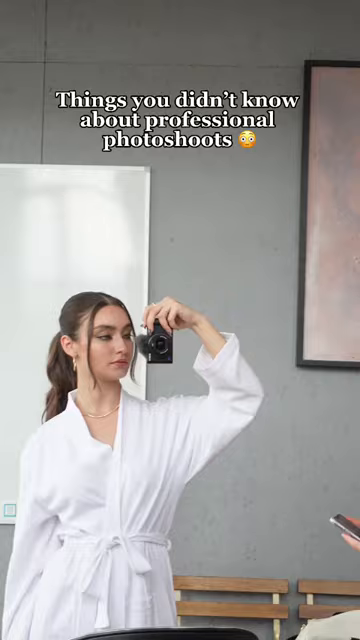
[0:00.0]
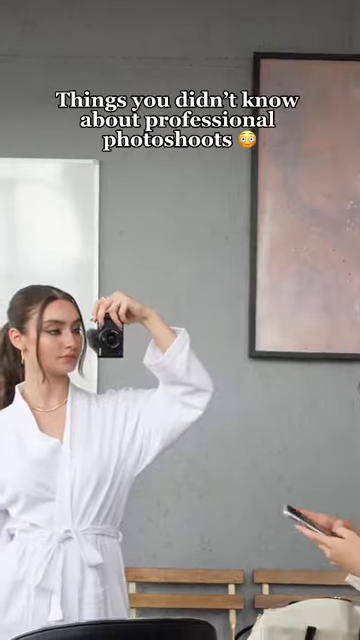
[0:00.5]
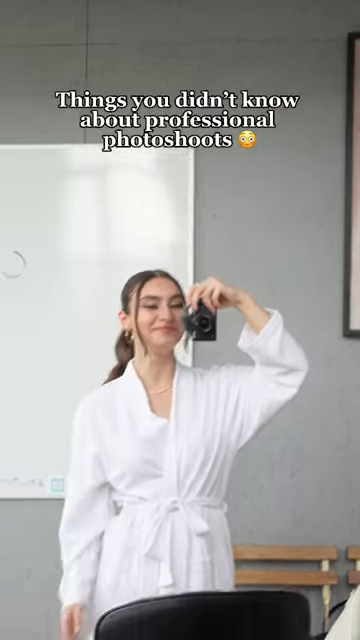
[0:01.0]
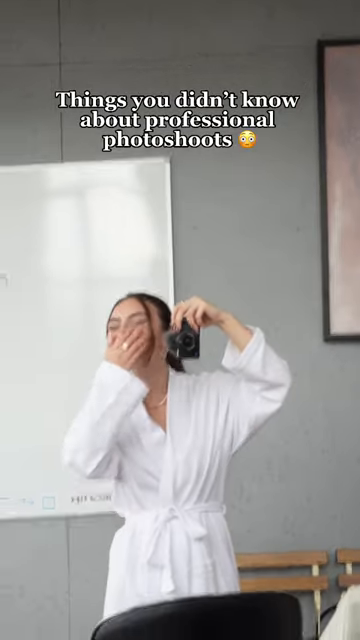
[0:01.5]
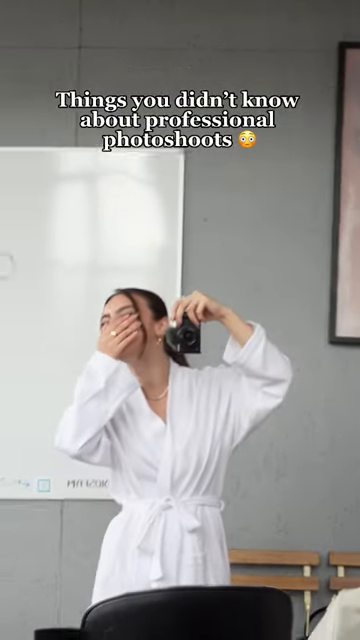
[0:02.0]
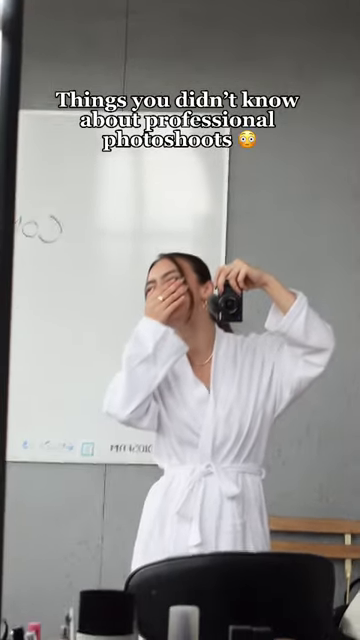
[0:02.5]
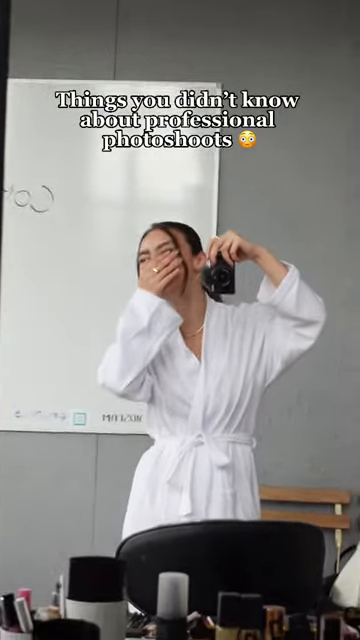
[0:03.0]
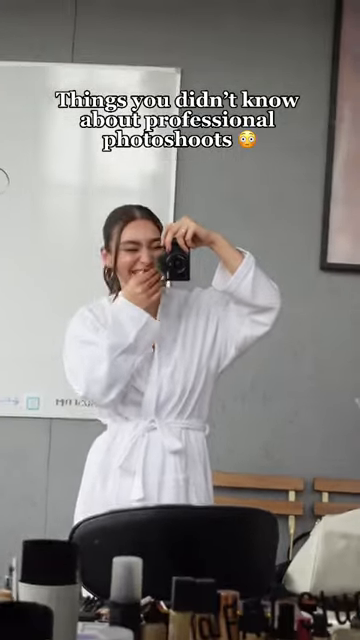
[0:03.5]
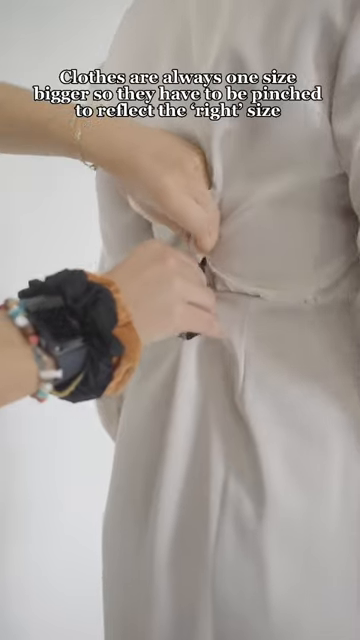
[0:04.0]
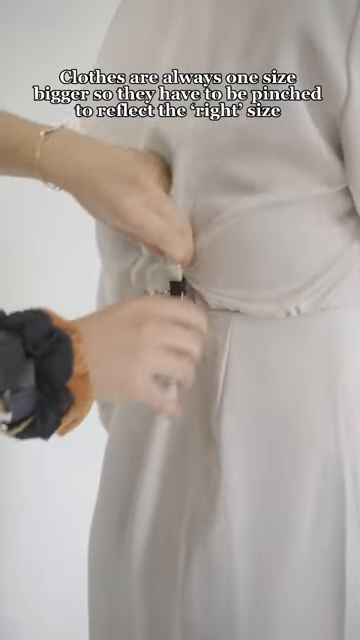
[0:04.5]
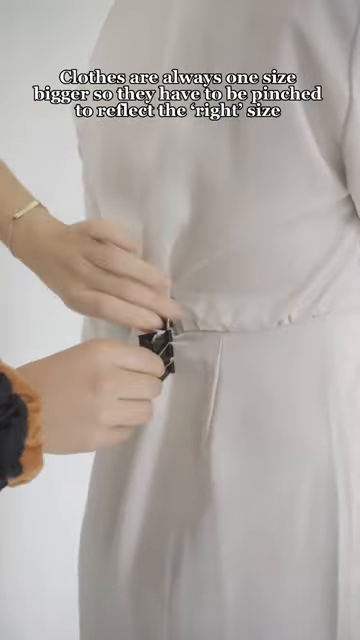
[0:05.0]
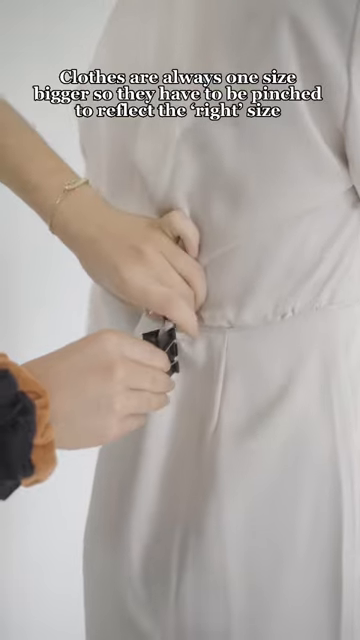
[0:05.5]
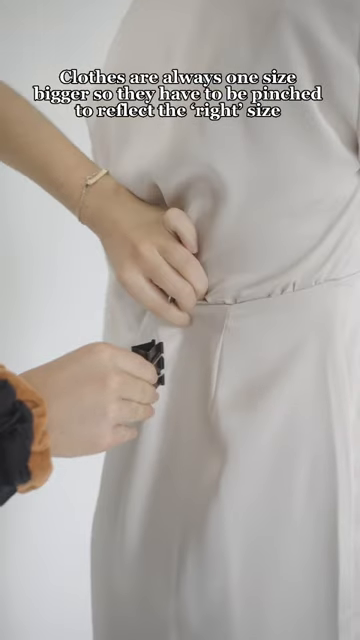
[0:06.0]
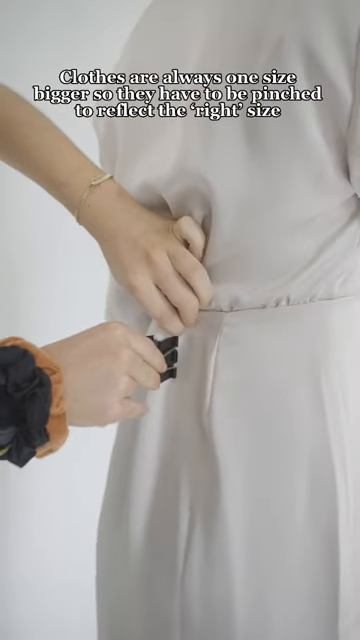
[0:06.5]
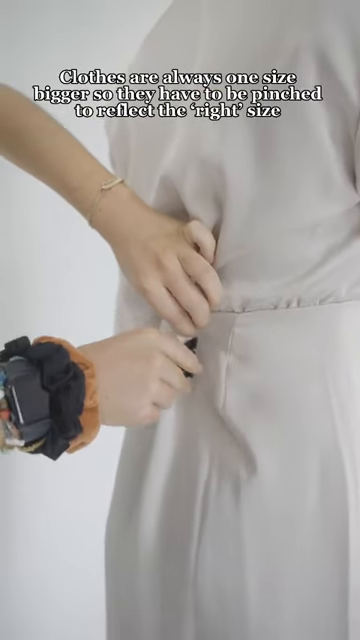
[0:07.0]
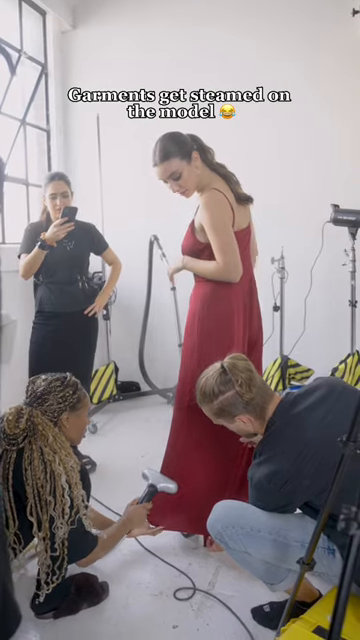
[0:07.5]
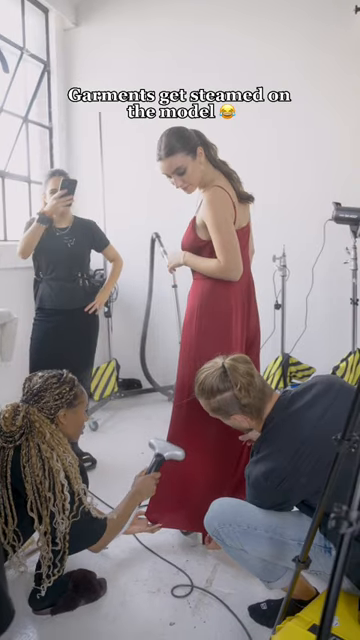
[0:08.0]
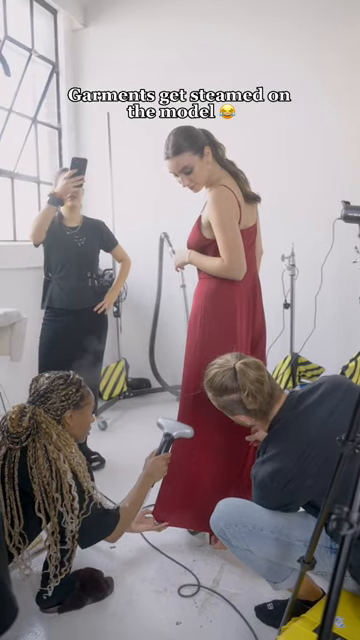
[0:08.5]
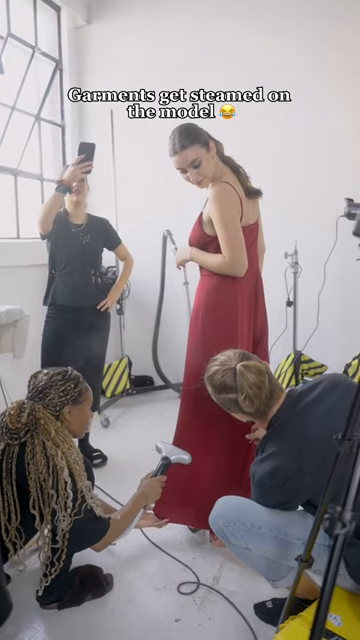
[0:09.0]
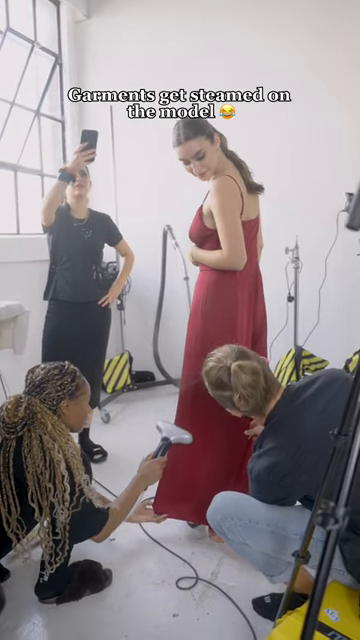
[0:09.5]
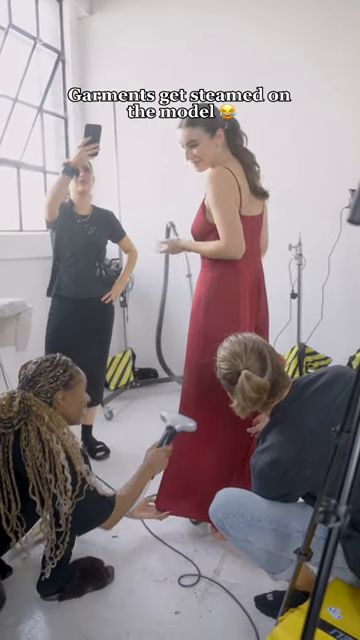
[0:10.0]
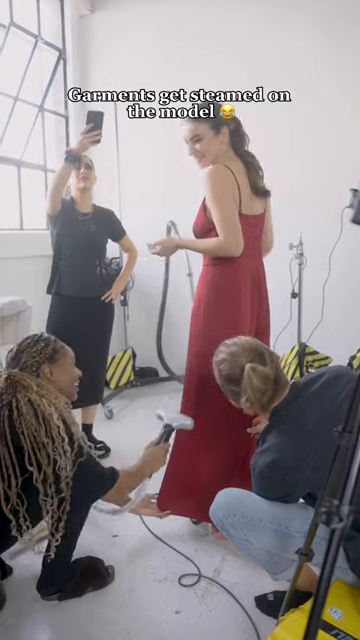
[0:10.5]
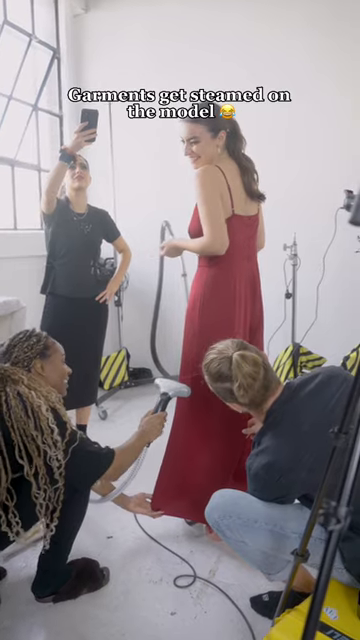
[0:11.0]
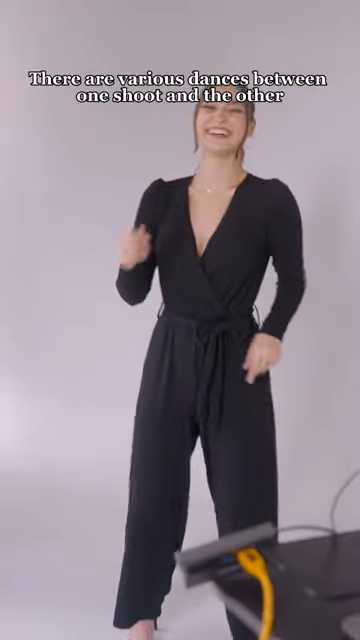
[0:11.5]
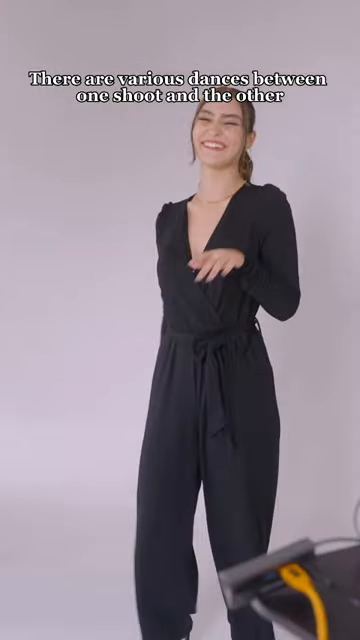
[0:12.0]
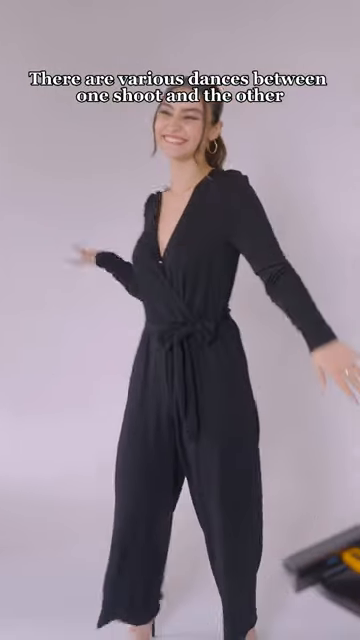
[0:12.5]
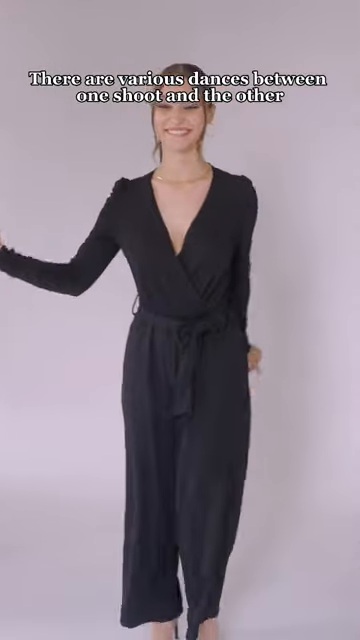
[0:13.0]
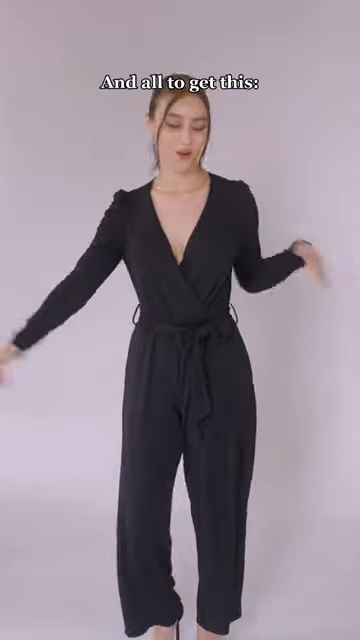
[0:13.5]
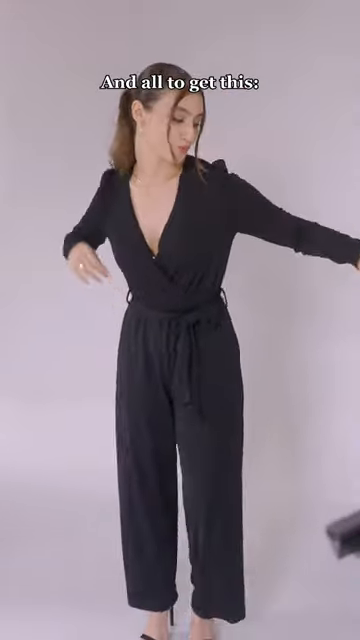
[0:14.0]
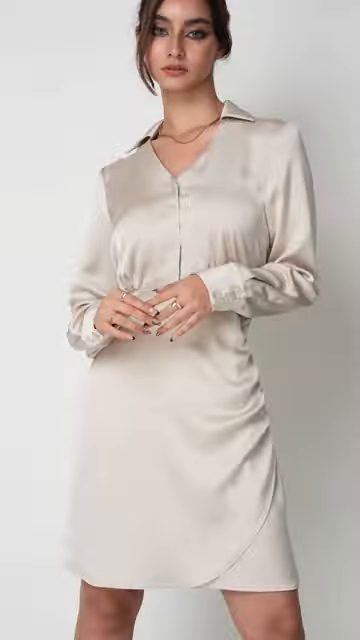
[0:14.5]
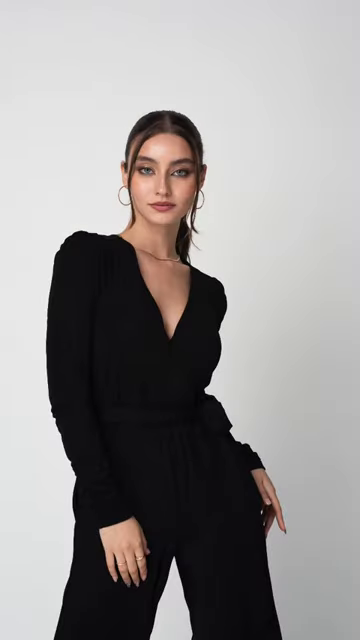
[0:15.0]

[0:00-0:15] A woman wearing a white robe holds a camera; it is unclear whether she is pointing it at a mirror and filming herself. She appears to be laughing and covers her mouth. Text reads "things you didn't know about professional photo shoots" with an emoji with big eyes. The setting appears to be inside a photography studio. The next image says "clothes are always one size bigger, so they have to be pinched to reflect the right size," and it looks like someone is getting their clothes clipped at the middle of their back so that what they are wearing is form-fitted. Then text says "garments get steamed on the model," and a model in a red dress is shown. There are four people in the scene: the model in the red dress, with her hair tied in a ponytail; a person steaming, who looks to be African-American with blonde braids; a white male with long blonde hair tied into a ponytail, holding on to the dress; and a white person of unclear gender in the back, holding up a cell phone with a video documenting the scene. In the next scene, there are various dances between one shoot and the other, and a model in a black one-piece dances. The end results are then shown, with the model posing in three different outfits.